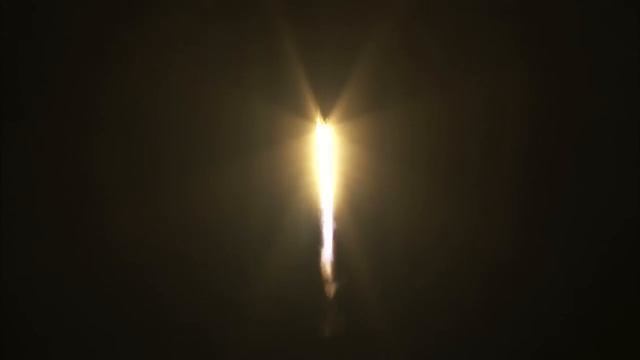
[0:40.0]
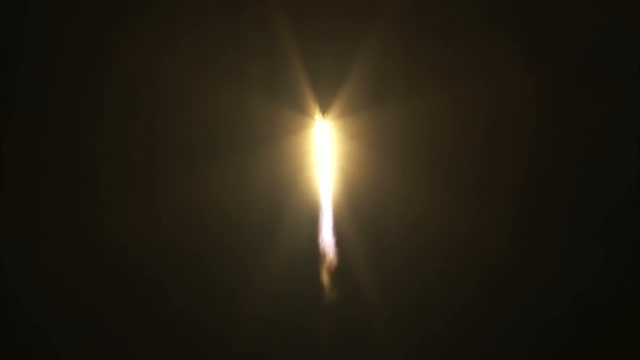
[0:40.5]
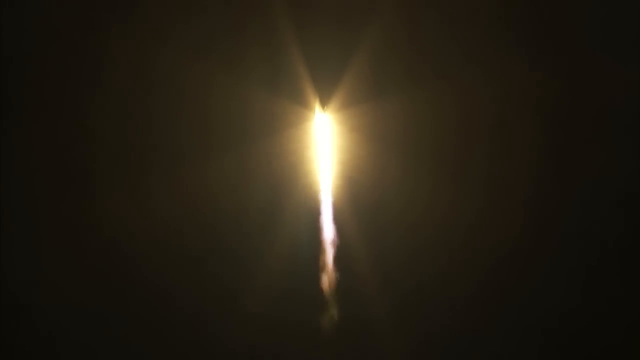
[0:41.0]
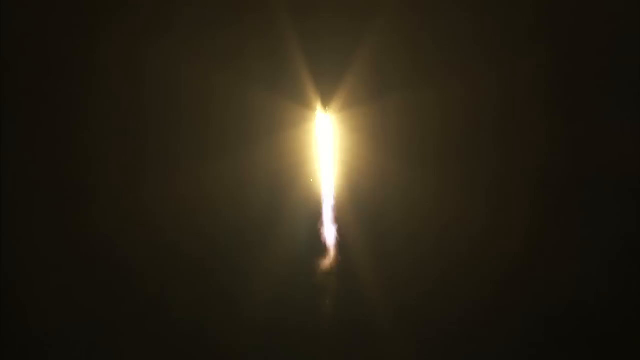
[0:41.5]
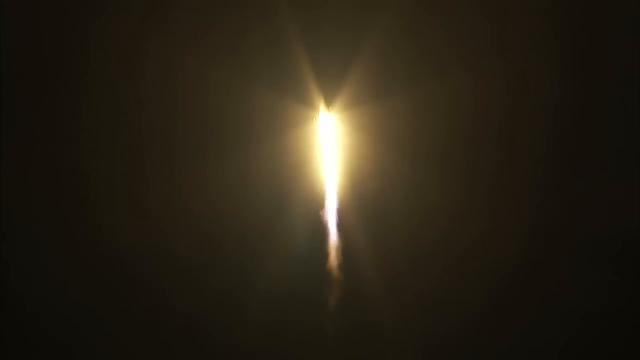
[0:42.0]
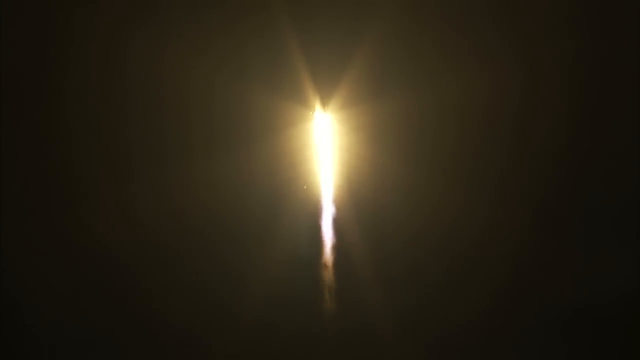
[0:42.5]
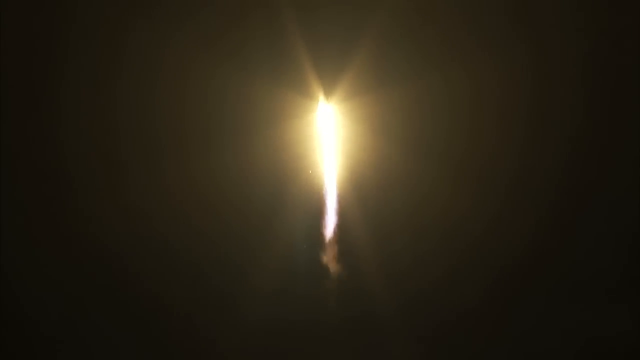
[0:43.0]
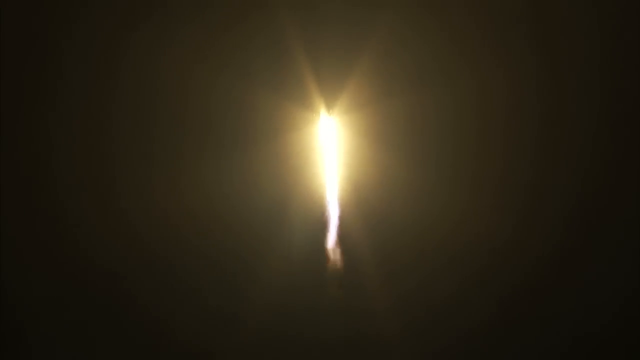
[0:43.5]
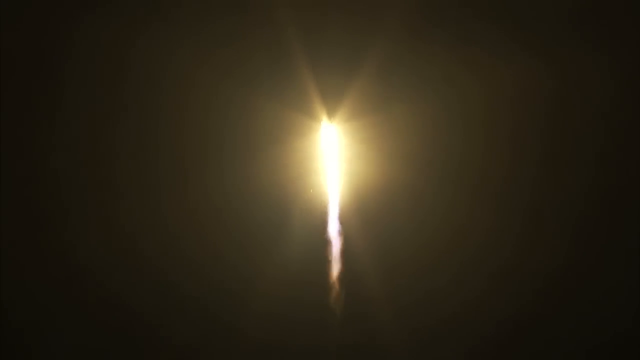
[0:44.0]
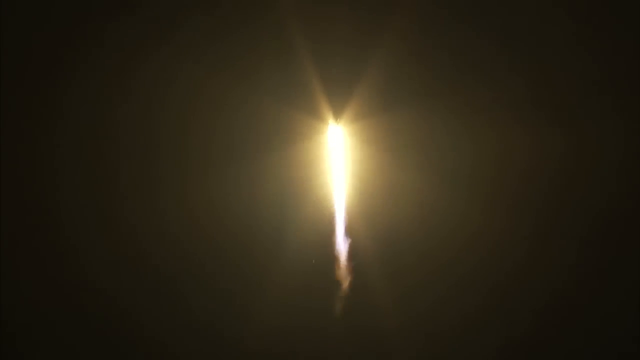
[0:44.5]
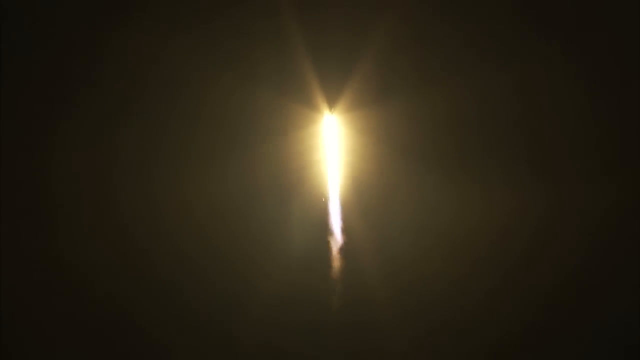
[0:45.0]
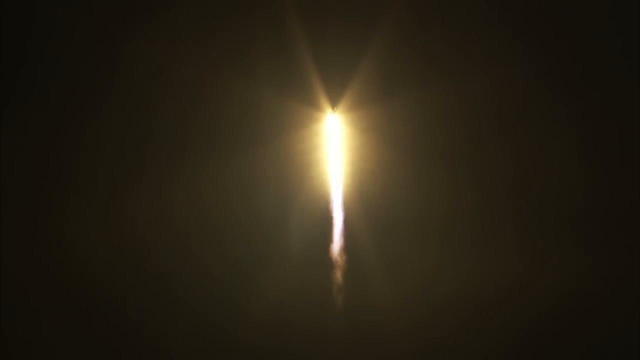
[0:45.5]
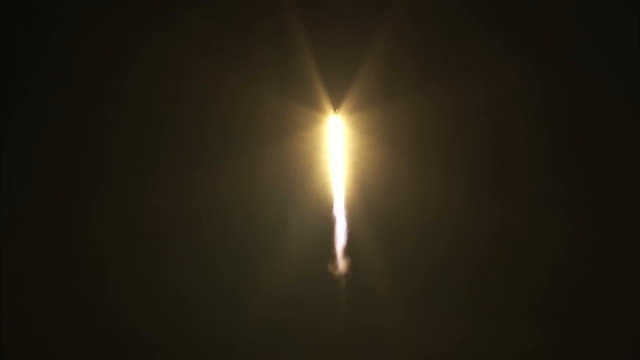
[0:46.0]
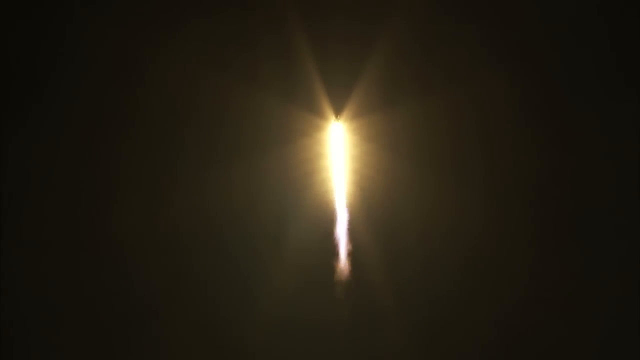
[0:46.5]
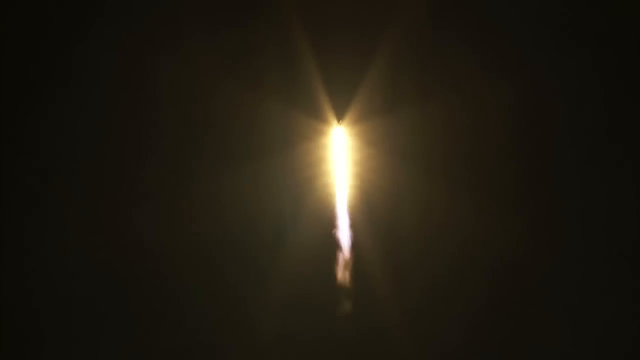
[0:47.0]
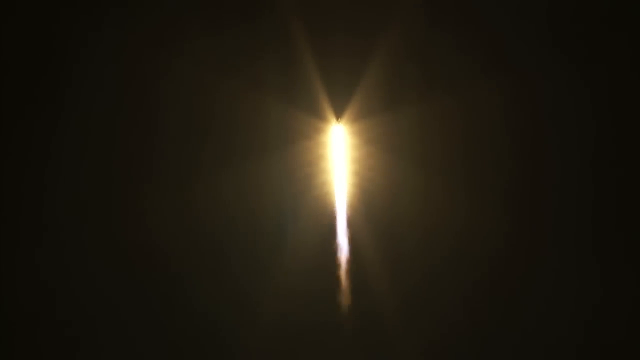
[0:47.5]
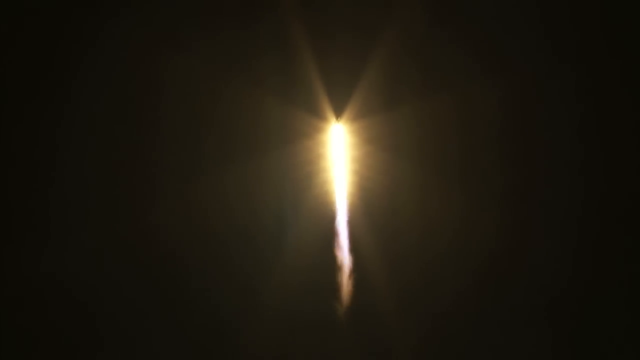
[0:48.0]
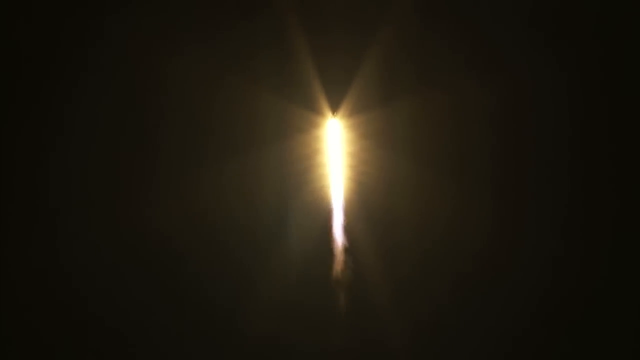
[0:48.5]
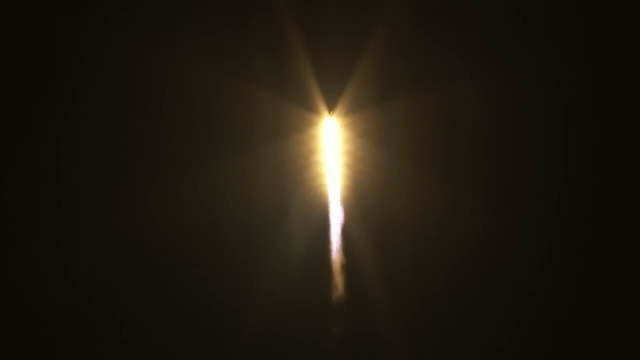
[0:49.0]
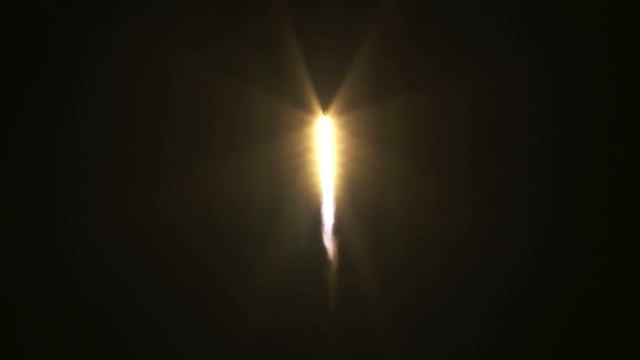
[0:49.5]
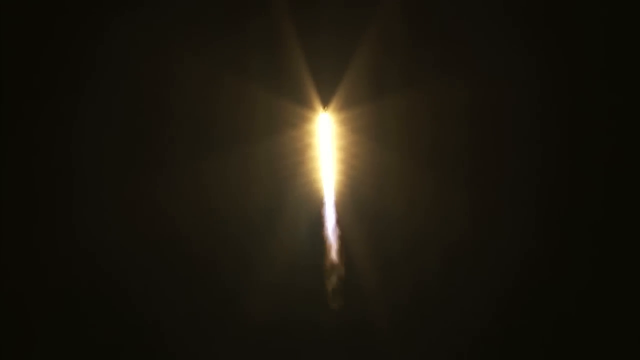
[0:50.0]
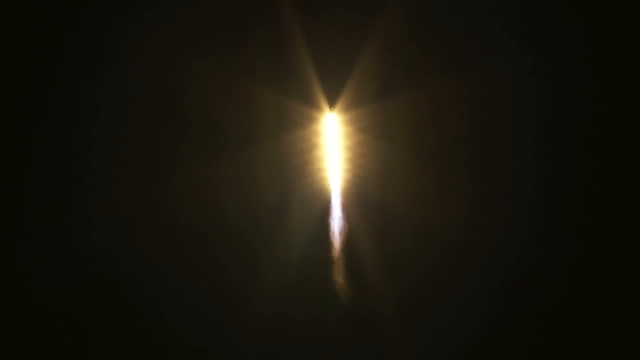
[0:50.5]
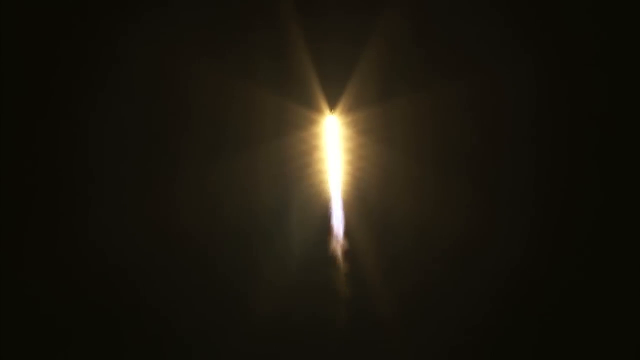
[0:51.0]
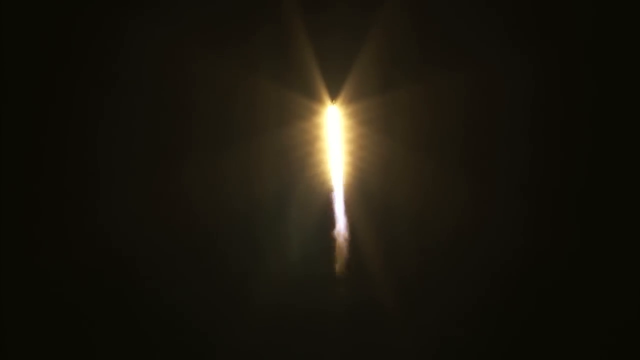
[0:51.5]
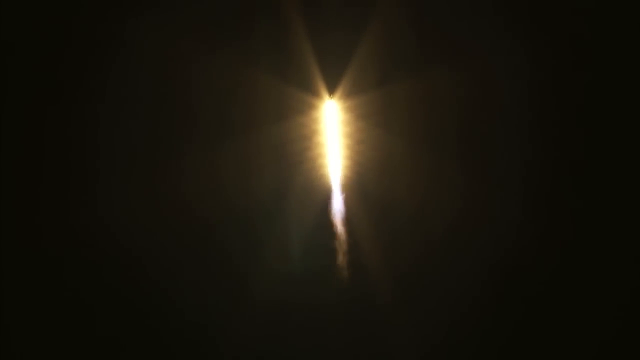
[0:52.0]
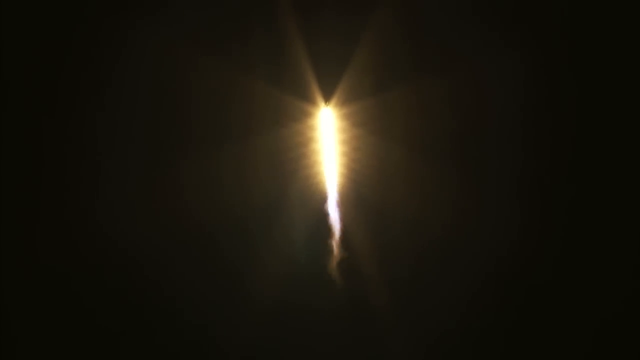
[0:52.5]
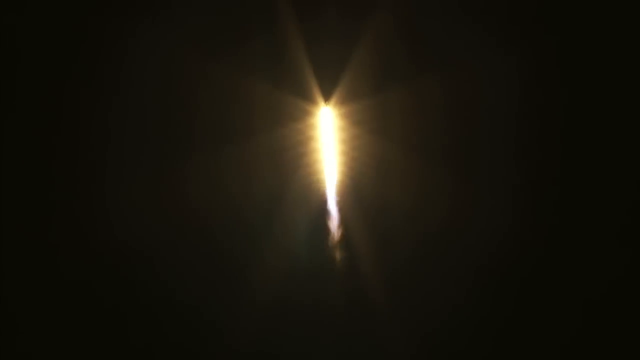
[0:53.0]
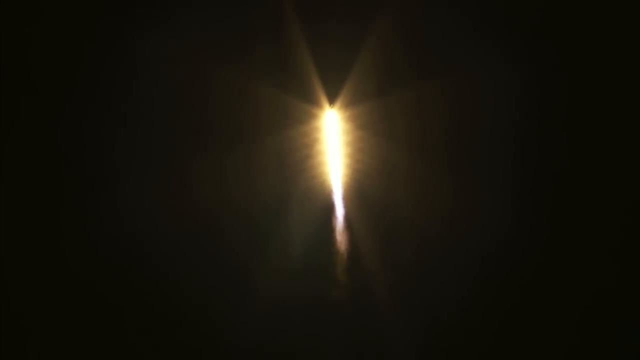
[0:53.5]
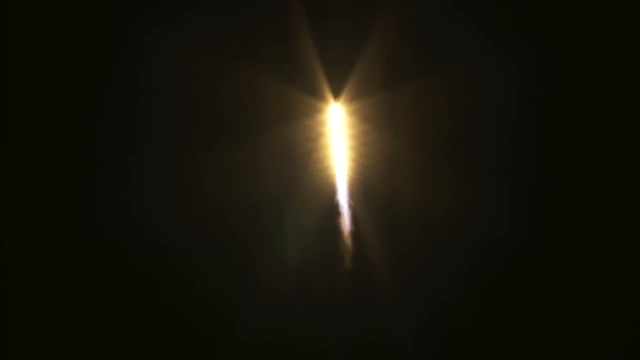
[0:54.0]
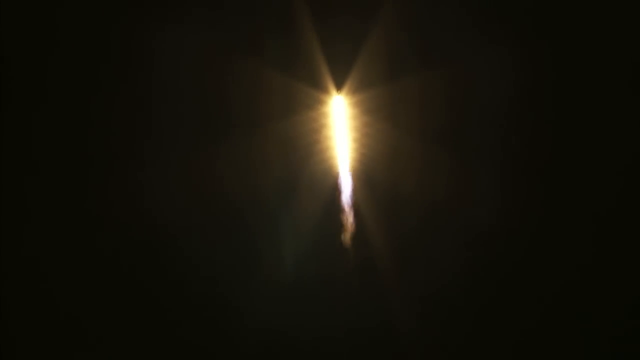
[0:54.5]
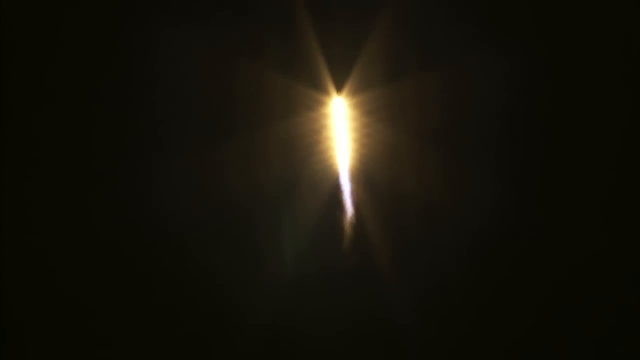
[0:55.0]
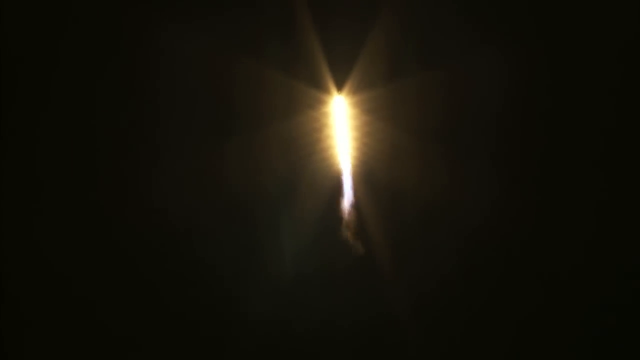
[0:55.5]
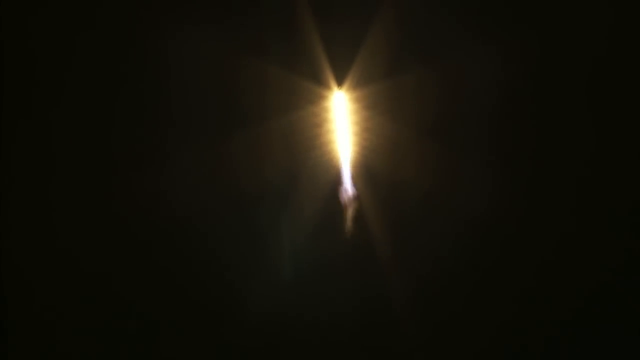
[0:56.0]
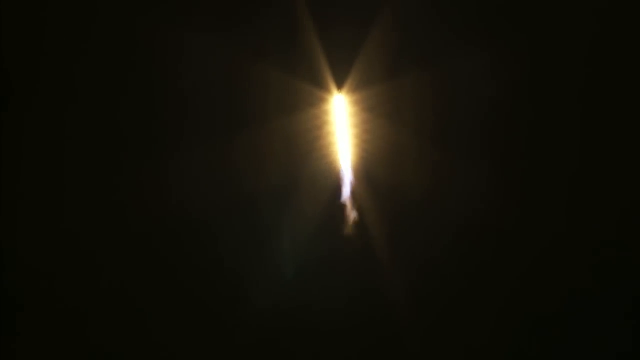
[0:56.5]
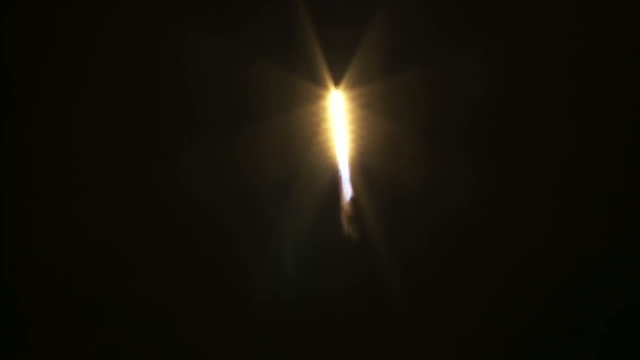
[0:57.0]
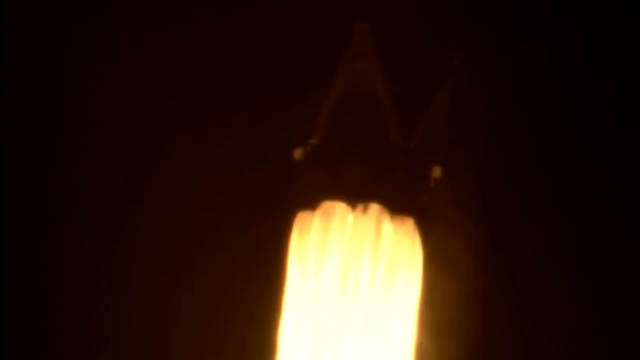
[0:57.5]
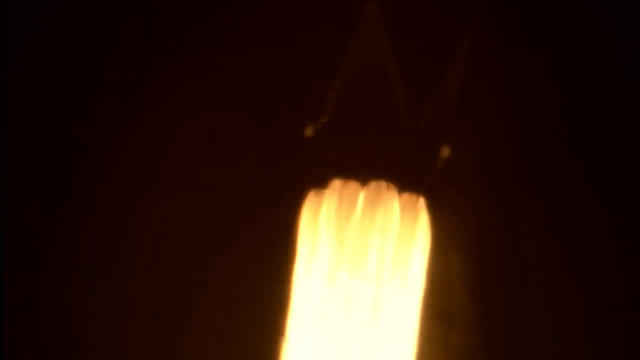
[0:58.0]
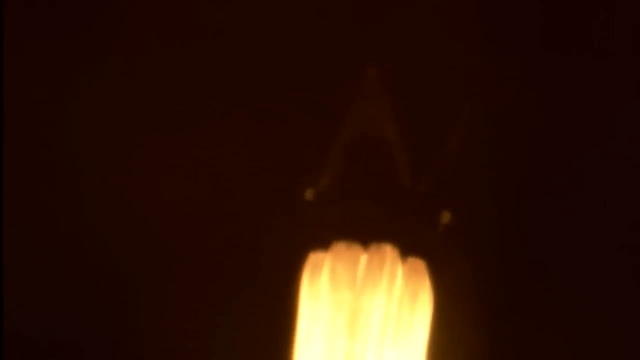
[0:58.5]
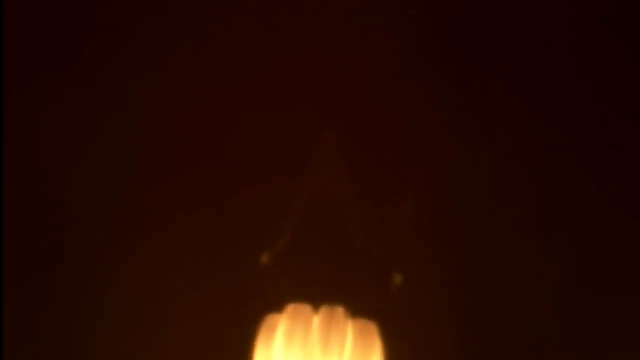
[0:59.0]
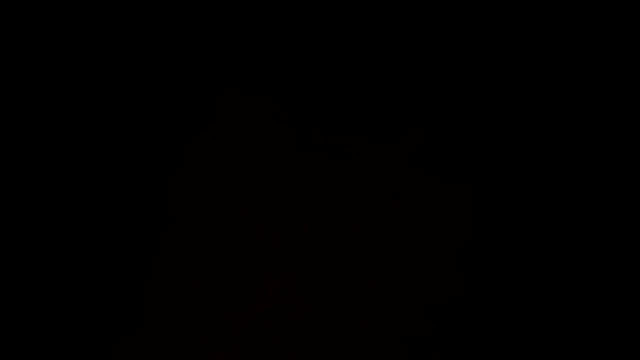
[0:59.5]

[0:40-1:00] The rocket continues to climb higher and higher into the night sky, with a trickle of smoke fanning out behind it. A closer view then shows flames and fire coming off the different circular engines of the rocket, producing the smoke tail behind it. The flames look like several long tubes of fire flying out behind the rocket, like big long fans of flames, all very long and coming out at the same time. Several engine-type things, almost like turbines, stick out of the bottom of the rocket, and the flames and smoke shoot out from them. The rocket keeps climbing higher and higher.